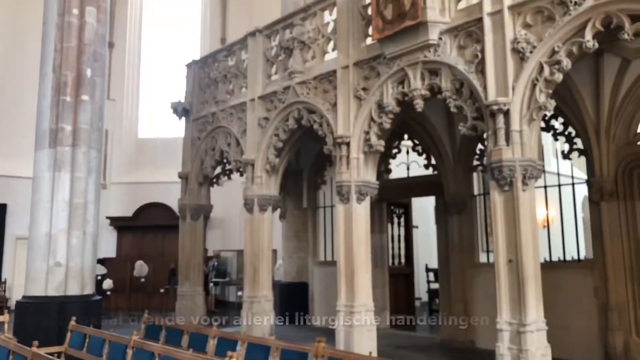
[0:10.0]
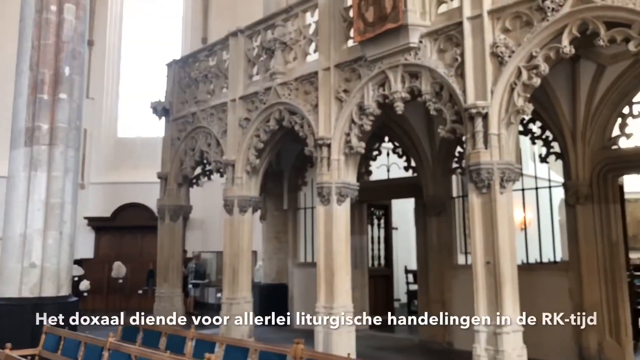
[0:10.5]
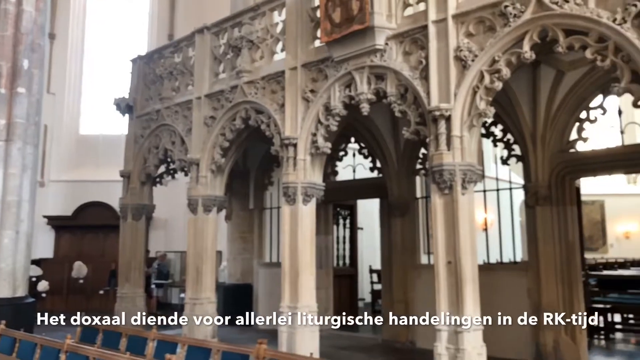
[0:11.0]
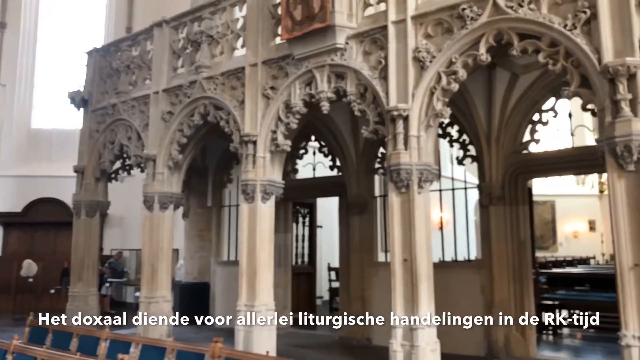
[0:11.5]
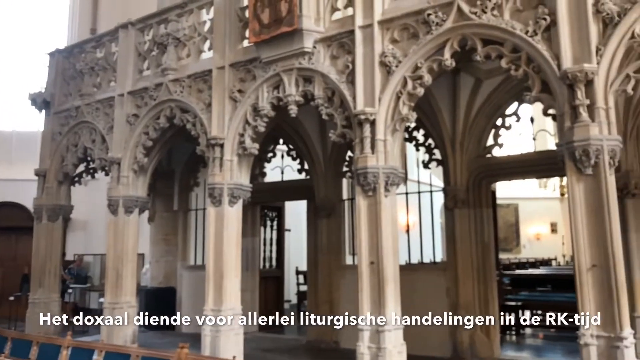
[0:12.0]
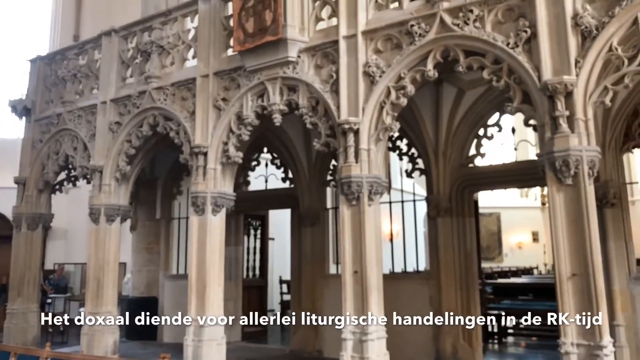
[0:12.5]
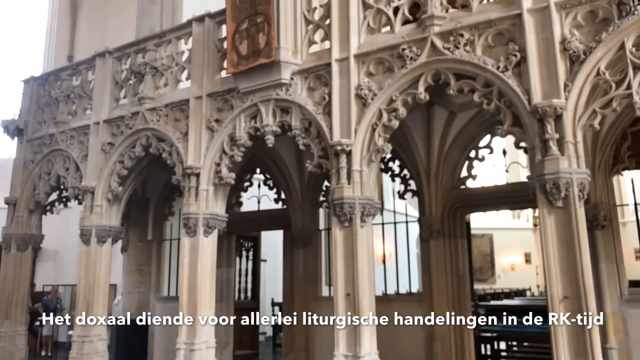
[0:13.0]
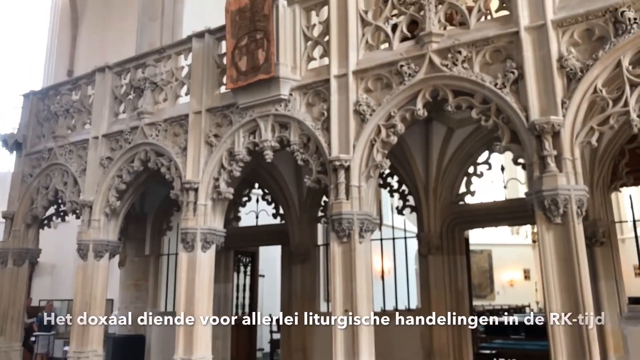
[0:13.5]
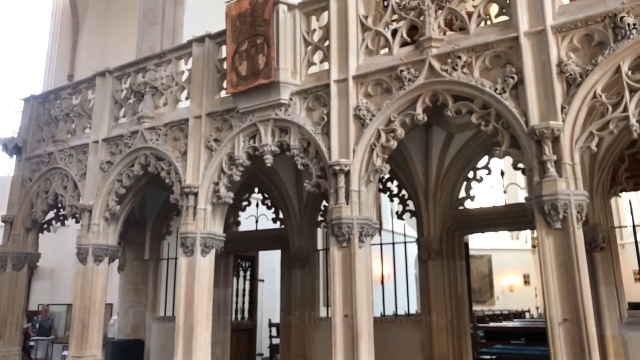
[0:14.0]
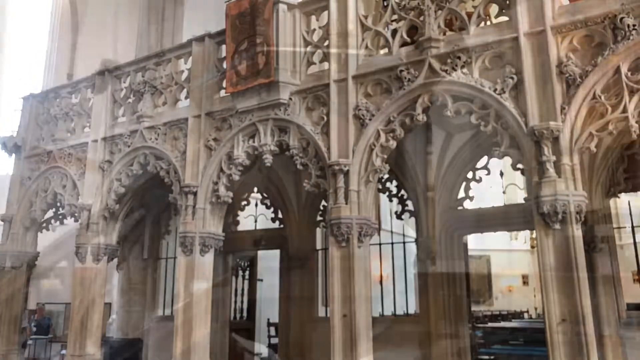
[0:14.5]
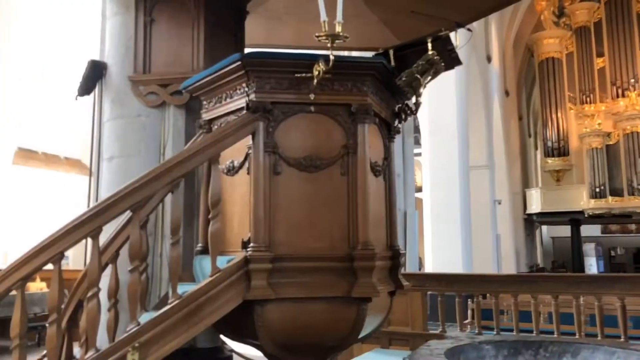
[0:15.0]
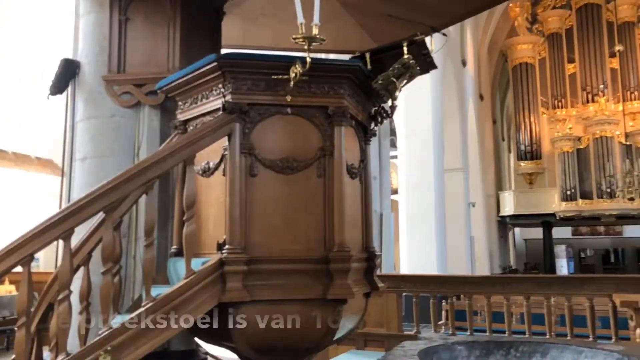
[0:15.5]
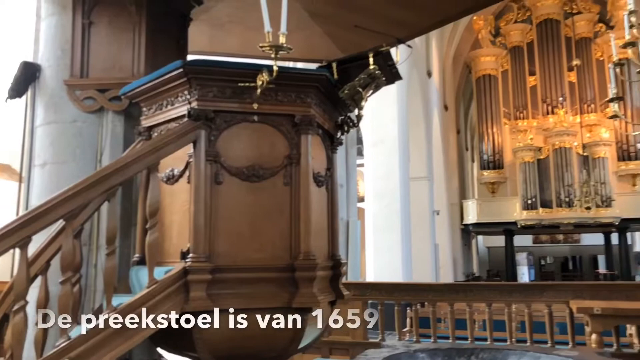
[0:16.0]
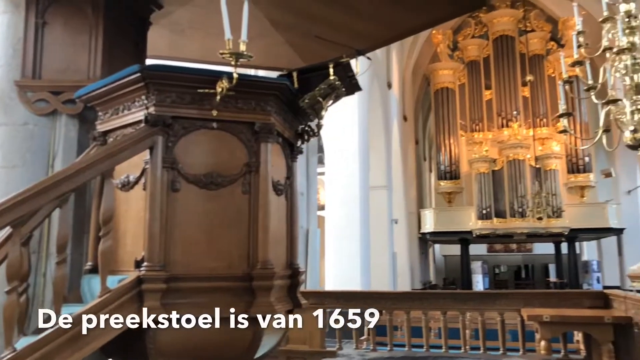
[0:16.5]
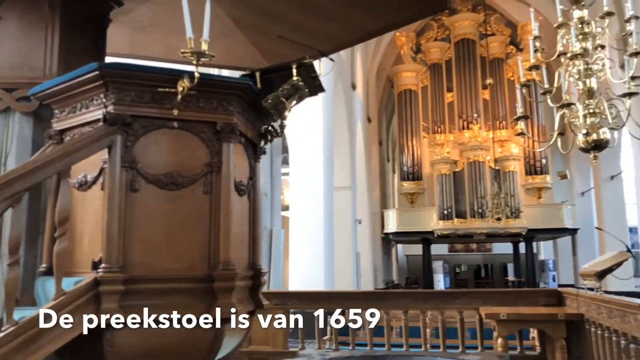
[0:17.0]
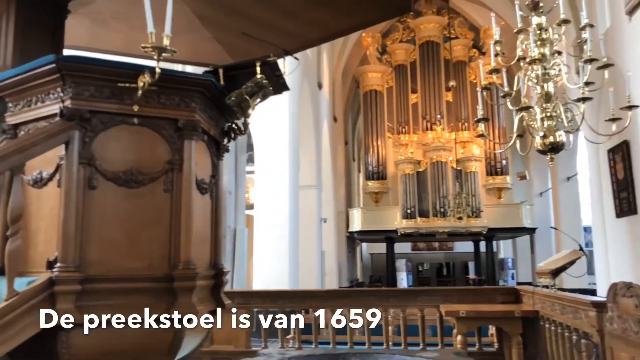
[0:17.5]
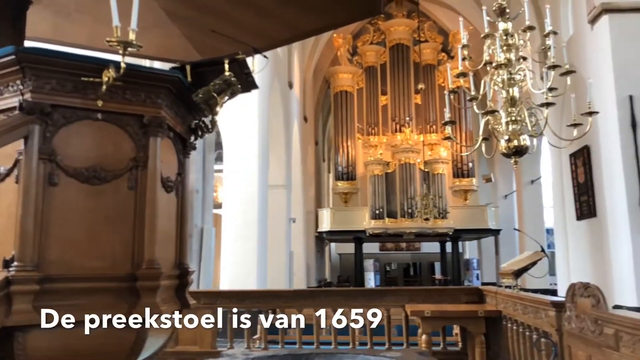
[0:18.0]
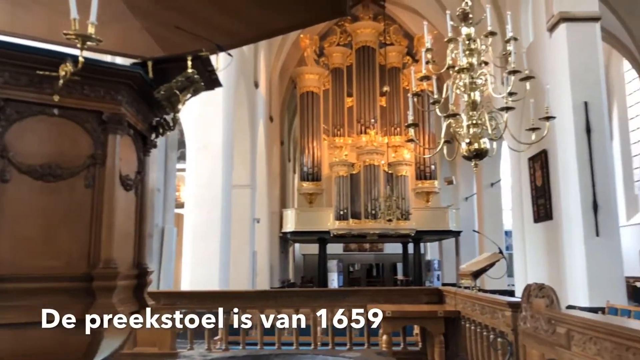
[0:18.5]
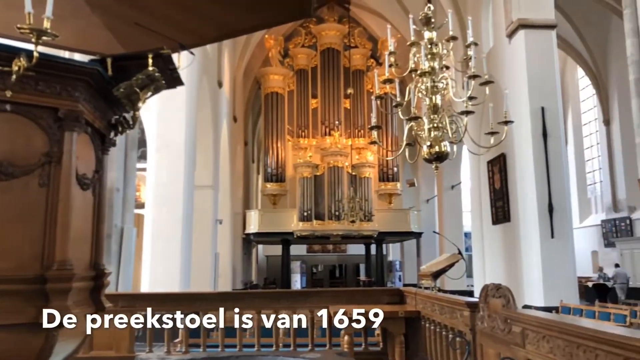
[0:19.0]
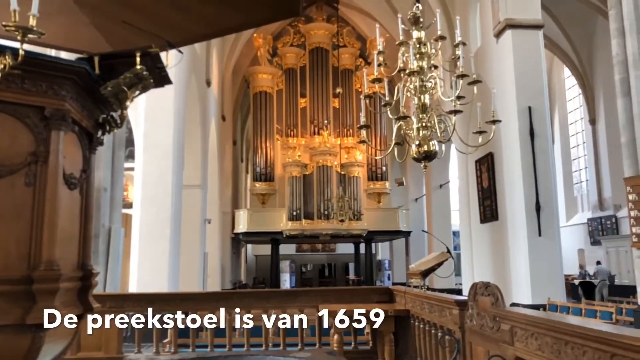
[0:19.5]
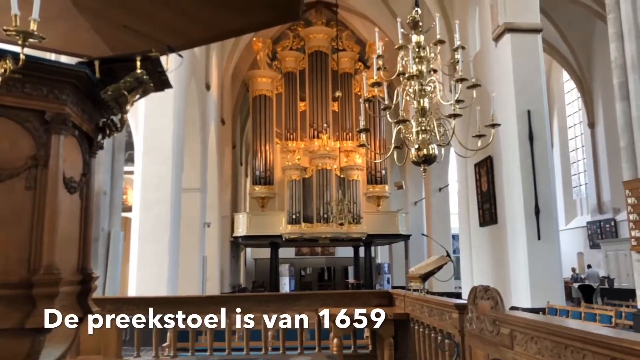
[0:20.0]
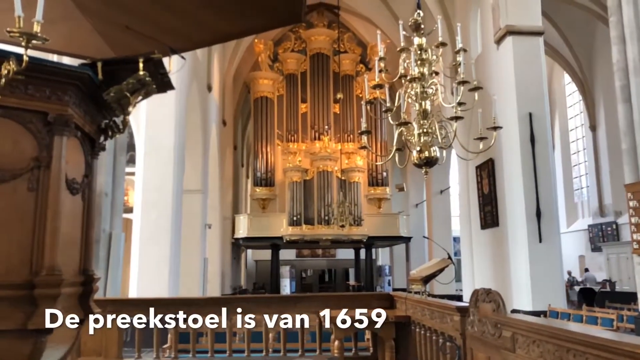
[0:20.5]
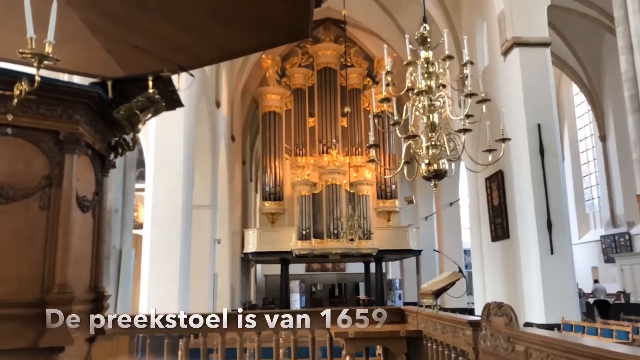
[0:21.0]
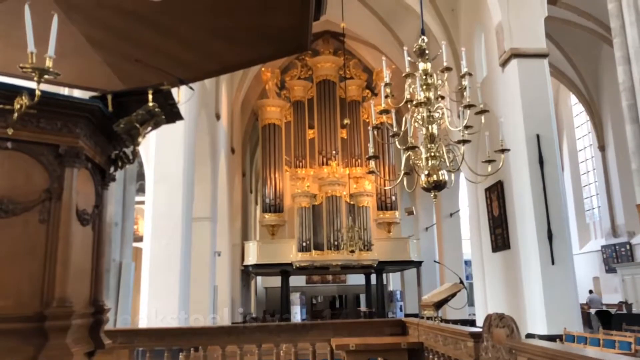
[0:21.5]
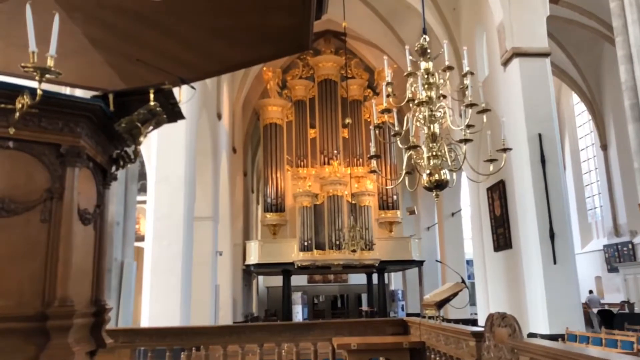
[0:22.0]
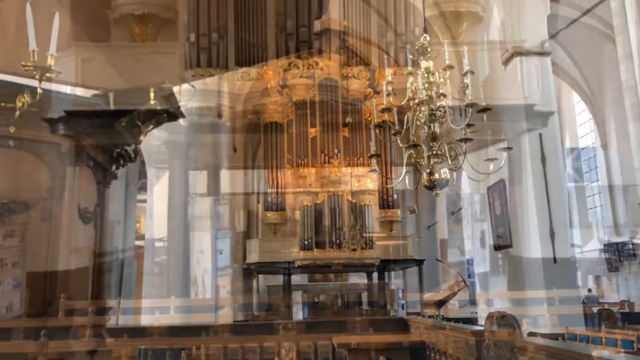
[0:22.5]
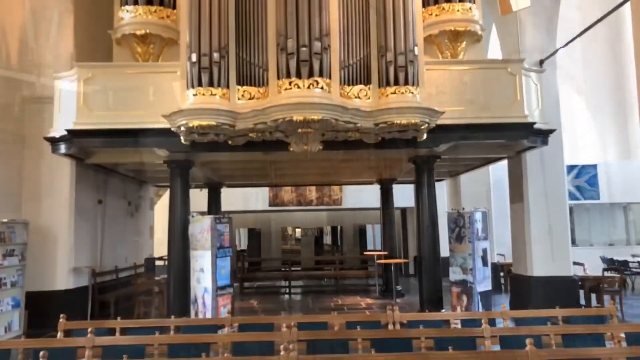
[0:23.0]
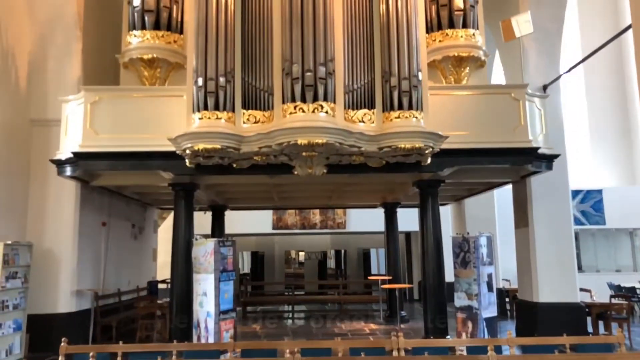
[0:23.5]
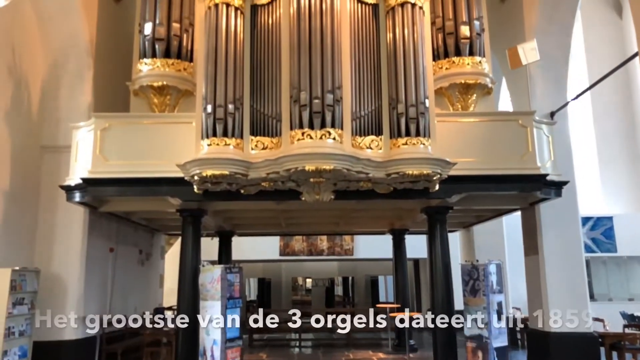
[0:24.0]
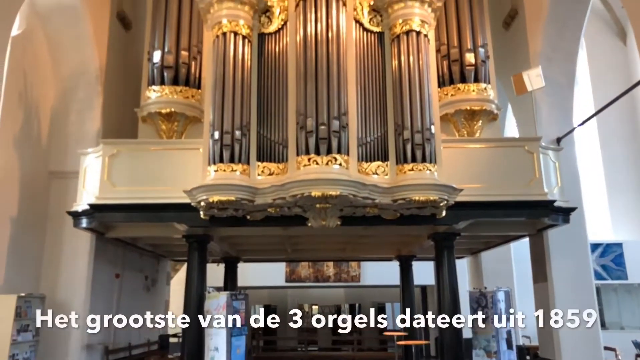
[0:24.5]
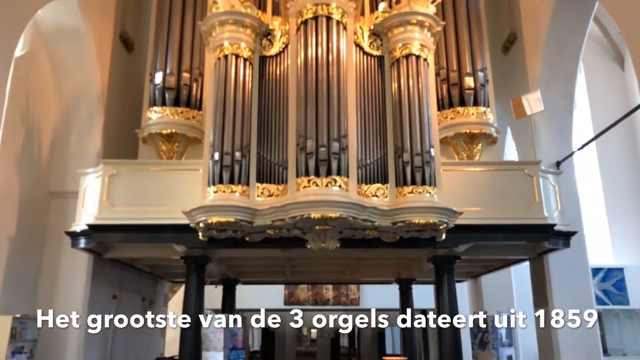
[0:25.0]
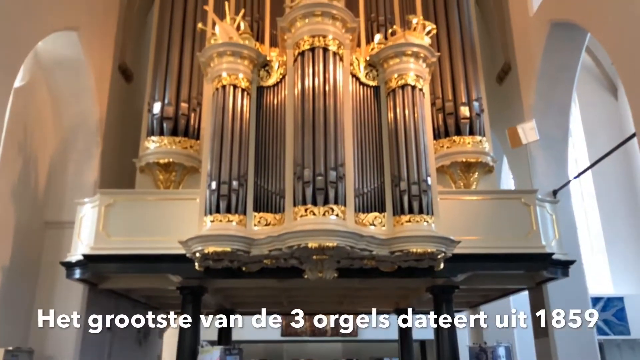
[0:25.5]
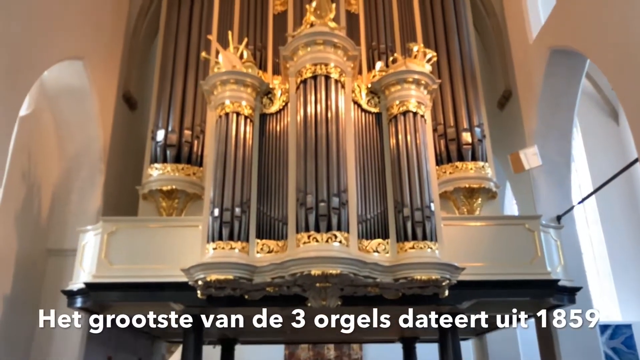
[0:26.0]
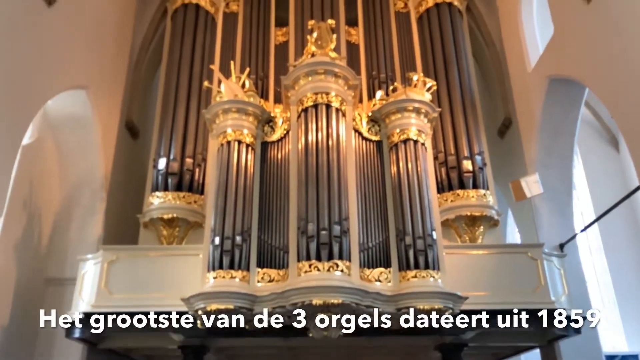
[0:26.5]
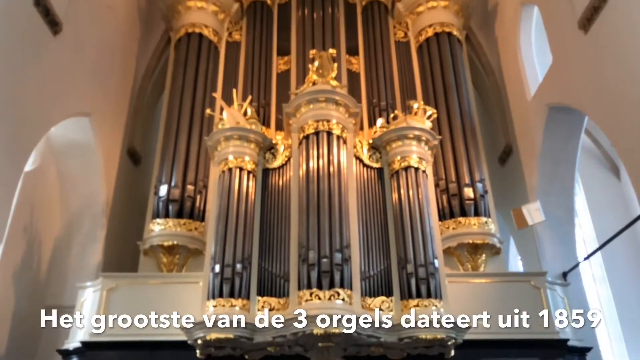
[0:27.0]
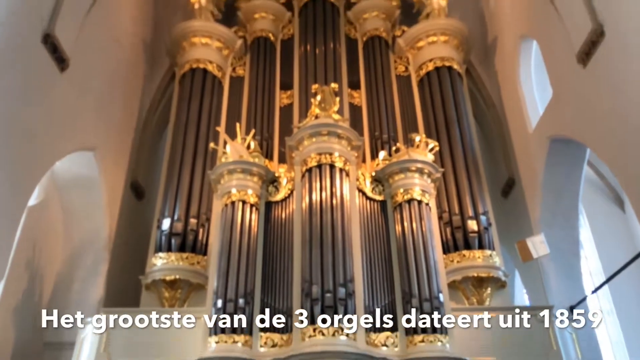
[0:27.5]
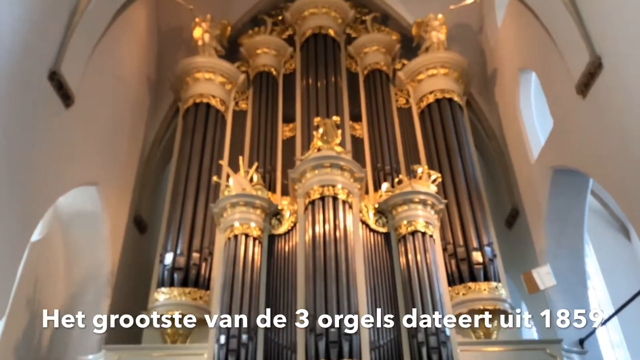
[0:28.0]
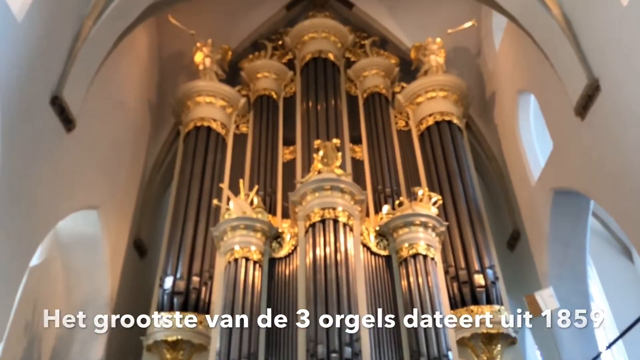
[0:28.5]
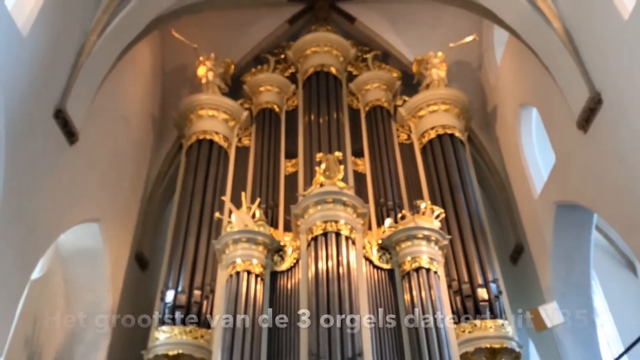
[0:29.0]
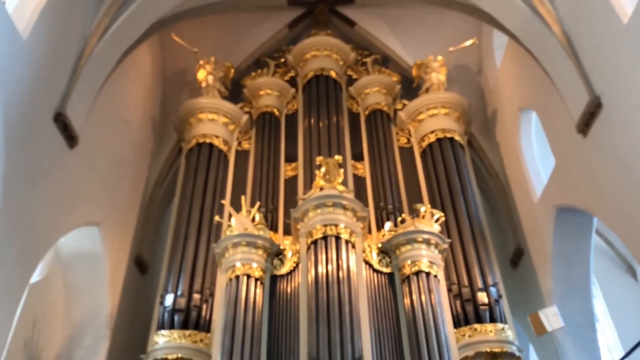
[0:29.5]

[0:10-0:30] White text, like subtitles, appears at the bottom, possibly in Dutch. The view moves to some of the elaborate archways inside the cathedral; one has five openings with rounded tops in a row, with elaborate carvings that kind of look like floral patterns. What looks like a flag is draped over it; it is brown with a crucifix inside a circle. More Dutch text appears at the bottom left of the frame along with the year 1659. The balcony area is visible, along with where the organ is, and the cathedral windows have a grid-like pattern. A close-up follows, with Dutch text at the bottom showing 1859. The area above the stage is shown, where cylindrical metal objects are arranged in a row of three on the bottom and a row of five on the top.